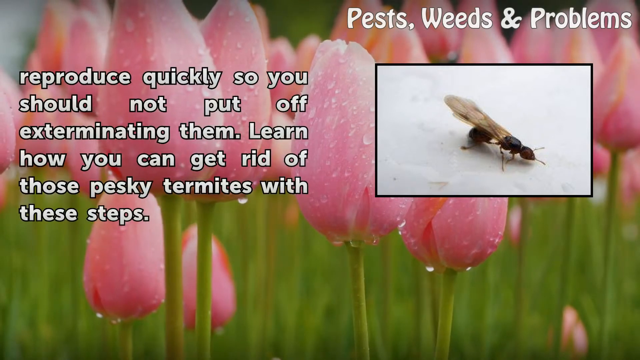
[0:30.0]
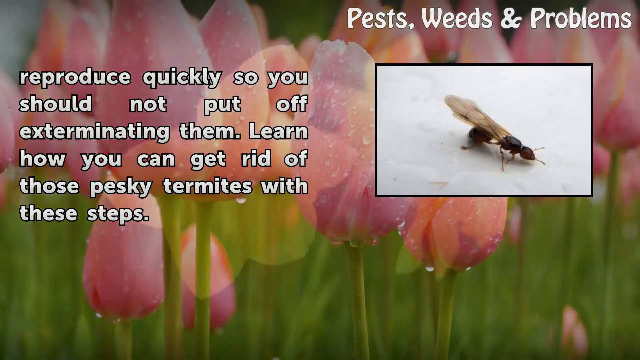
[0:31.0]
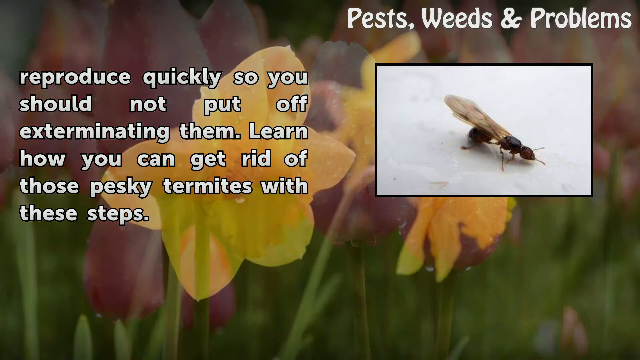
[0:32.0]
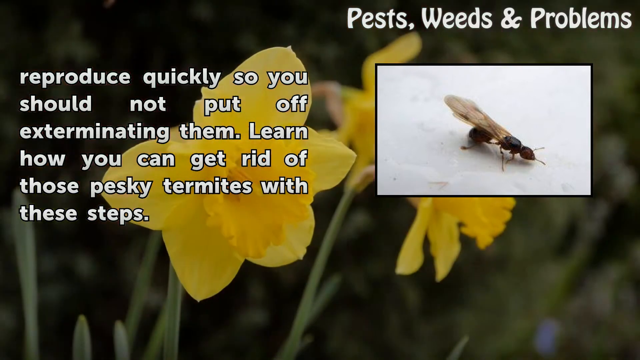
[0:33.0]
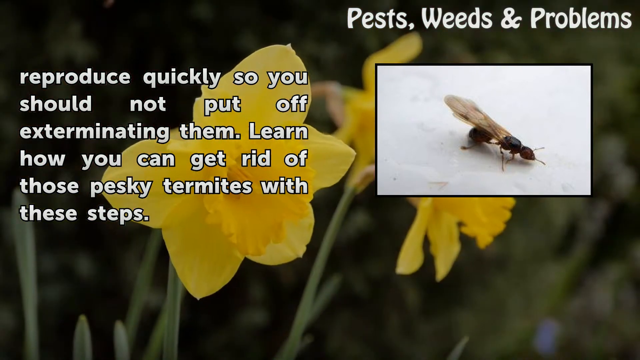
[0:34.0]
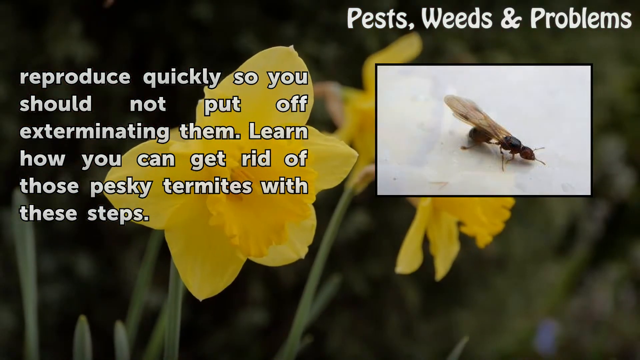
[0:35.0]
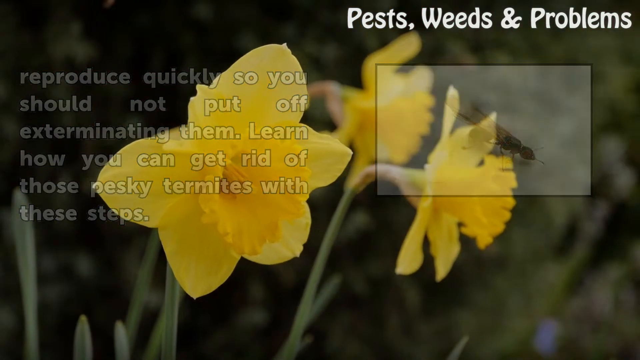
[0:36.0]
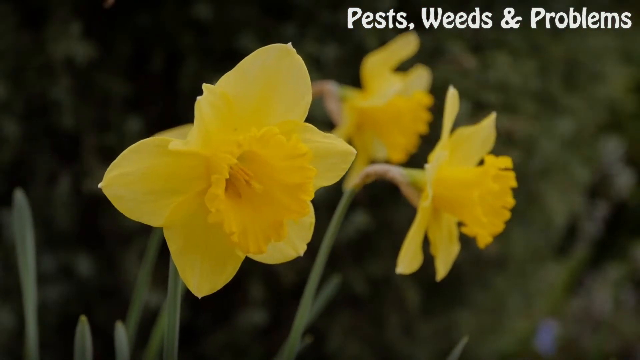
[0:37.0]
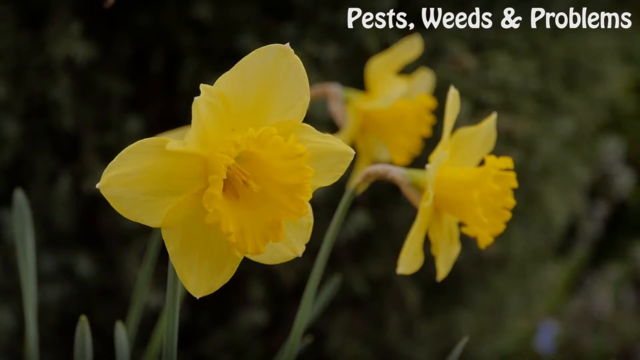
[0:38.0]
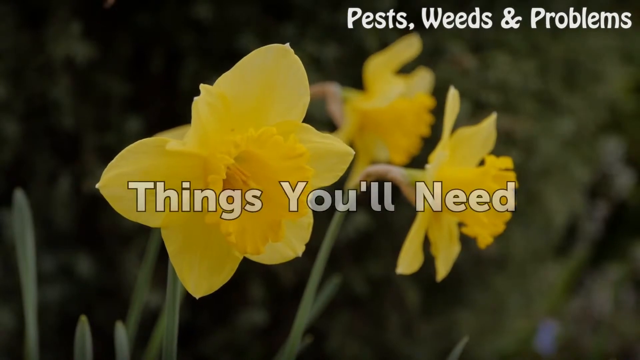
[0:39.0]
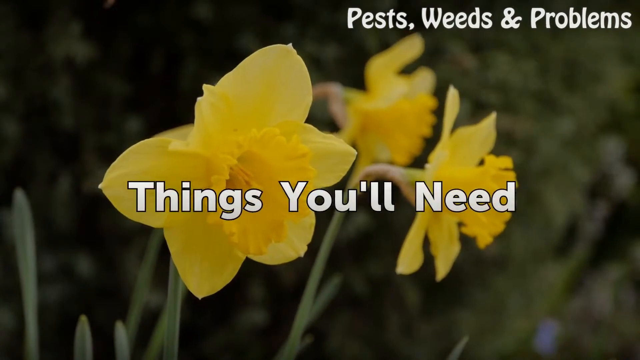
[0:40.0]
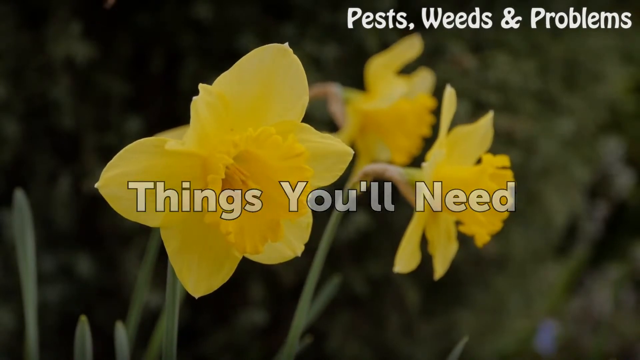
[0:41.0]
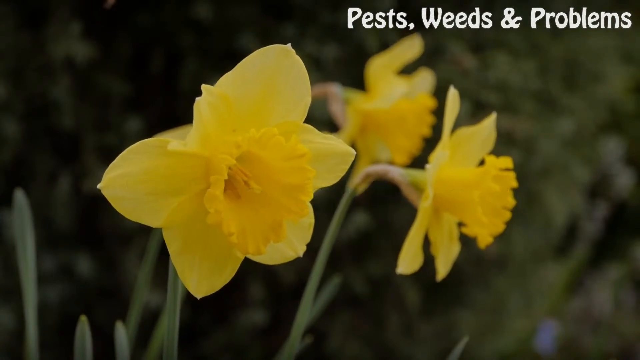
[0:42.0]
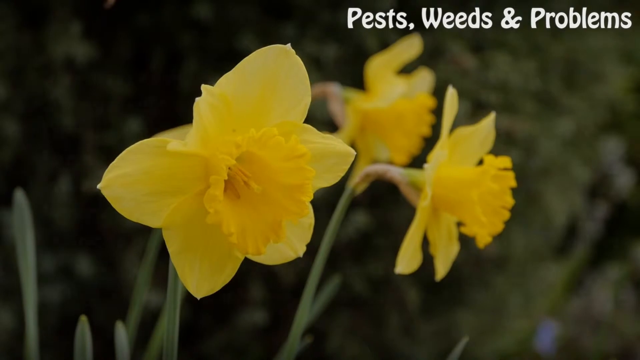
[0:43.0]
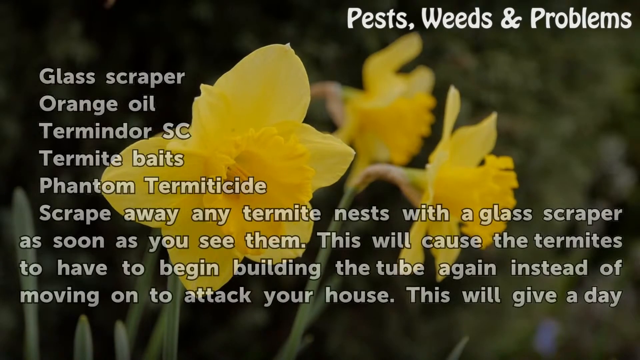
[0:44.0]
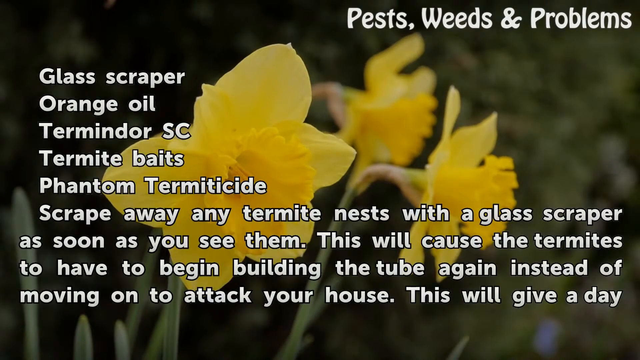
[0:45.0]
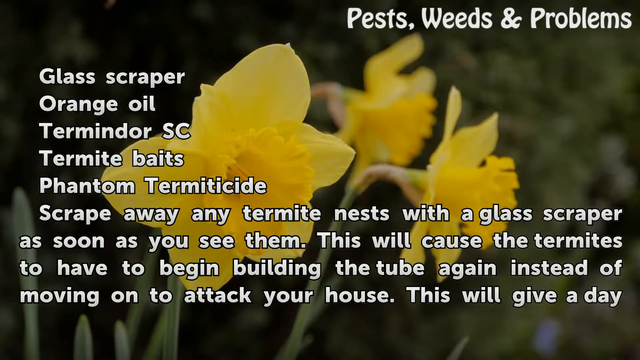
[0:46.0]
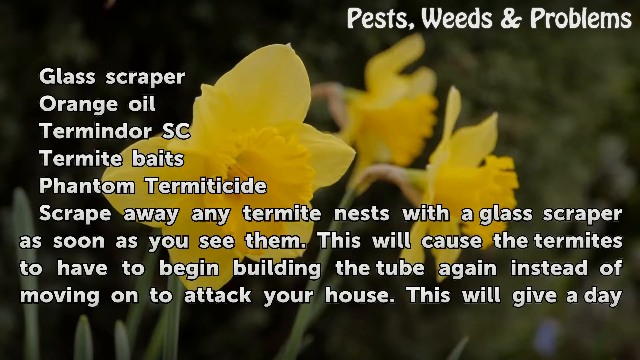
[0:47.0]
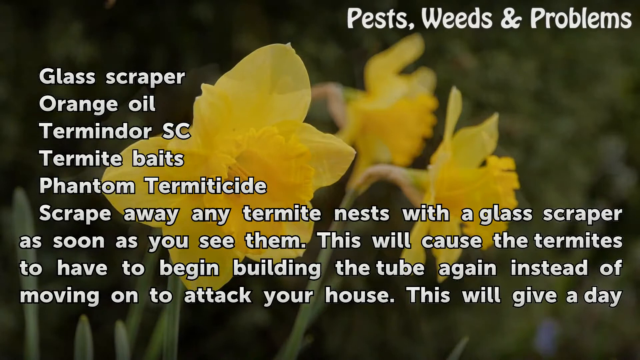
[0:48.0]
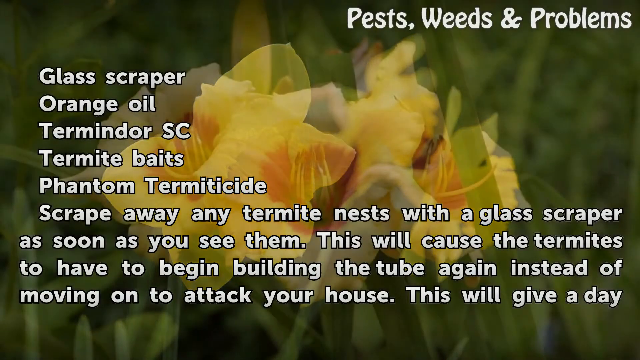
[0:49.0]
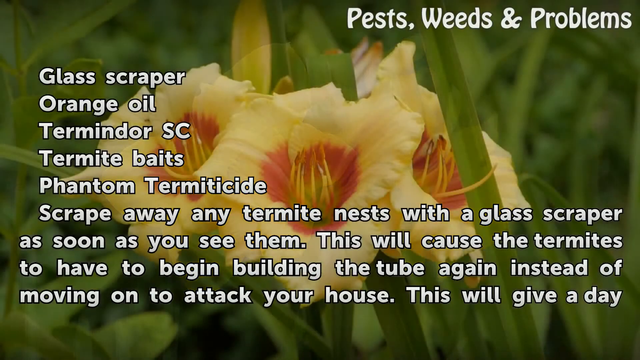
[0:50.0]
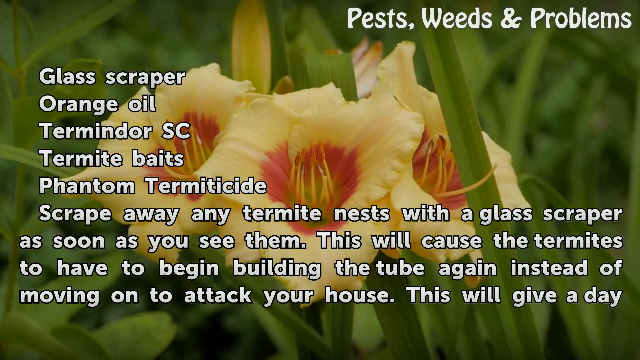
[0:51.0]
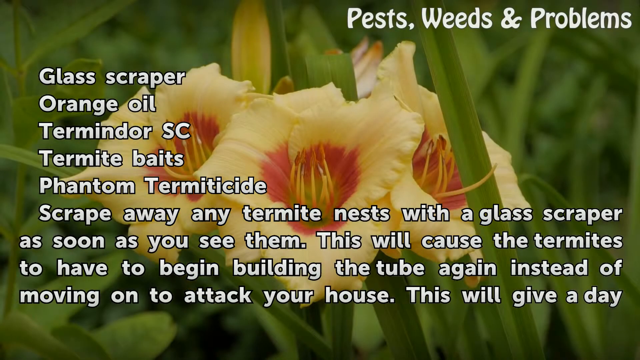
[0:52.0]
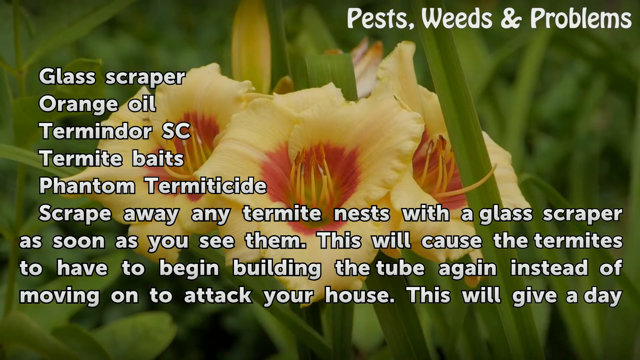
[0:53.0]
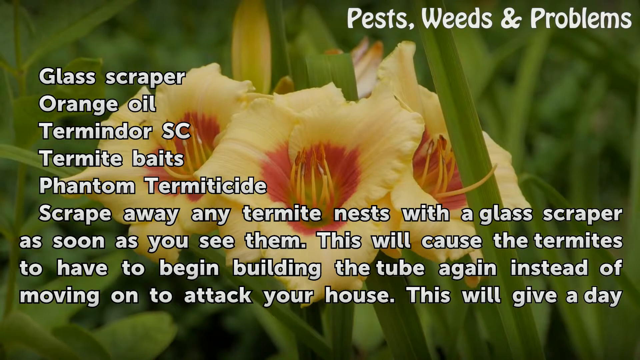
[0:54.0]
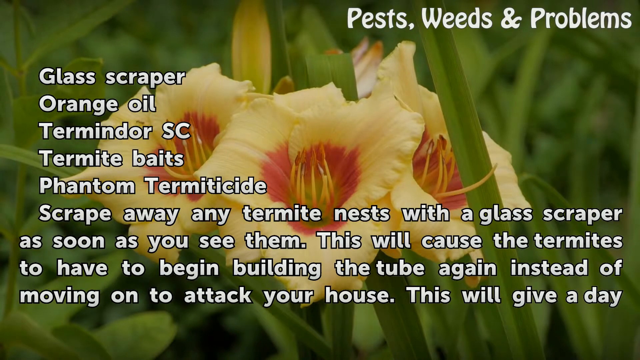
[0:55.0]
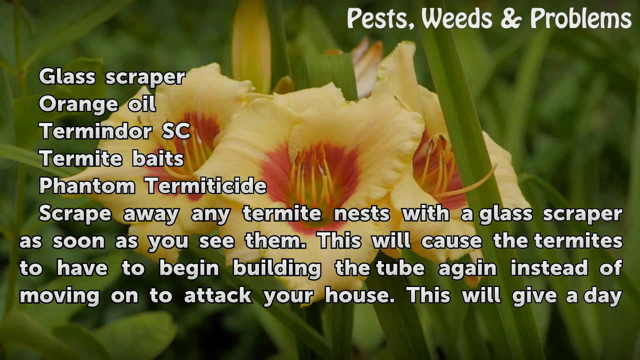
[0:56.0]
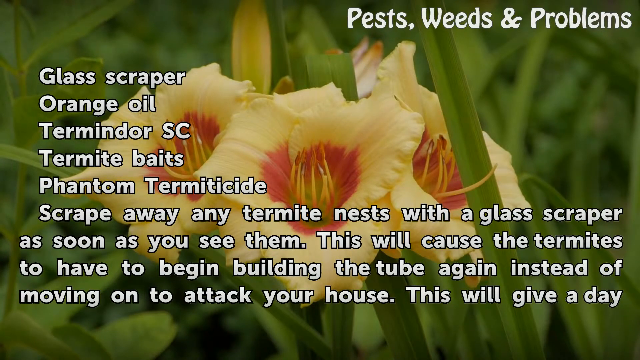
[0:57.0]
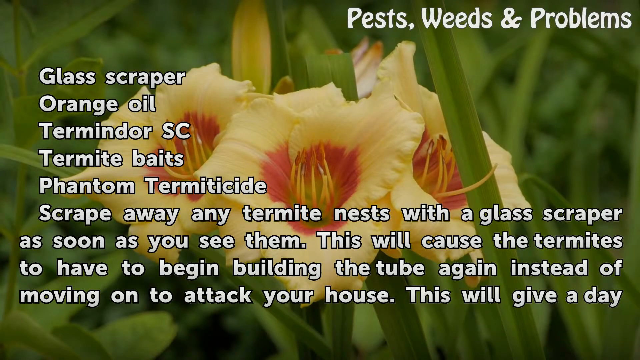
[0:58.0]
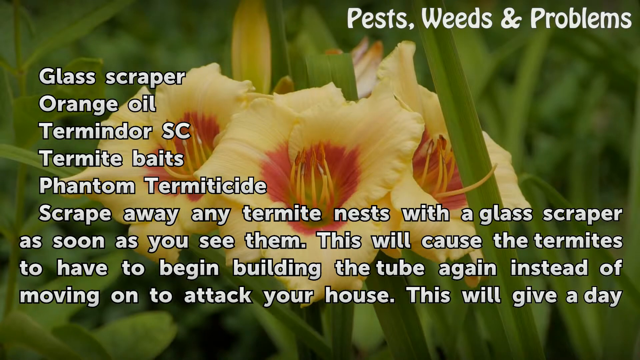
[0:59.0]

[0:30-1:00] Behind the caption, the footage of pink tulips mixes through to footage of yellow daffodils growing wild and waving gently in the breeze. The text and the photo of the termite fade away. The caption "Pests, weeds and problems" is still in the top right corner of the screen. Another caption then appears in the middle of the screen across the daffodils, reading "things you'll need." Next, a whole page of text appears on top of the daffodils: "glass scraper, orange oil, Termindore SC, termite baits, phantom termiticide. Scrape away any termite nests with a glass scraper as soon as you see them. This will cause the termites to have to begin building the tube again instead of moving on to attack your house." The text continues beyond this. Behind the text, the background shot changes to a close-up of gladioli flowers with red centres and yellow petals.